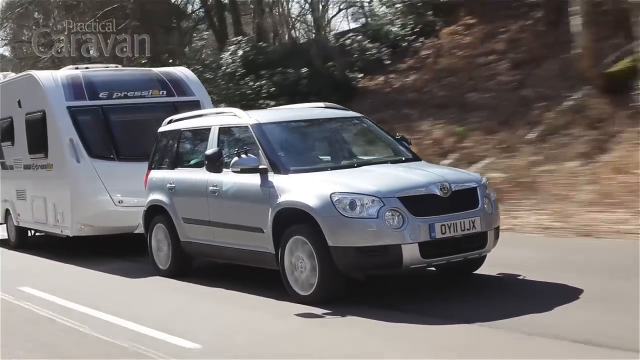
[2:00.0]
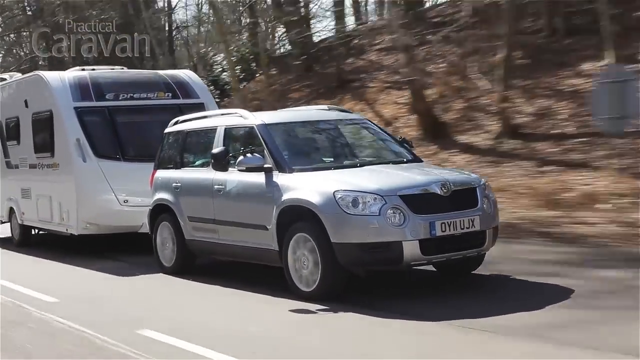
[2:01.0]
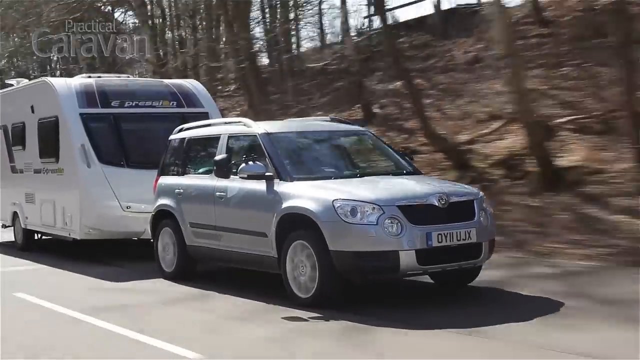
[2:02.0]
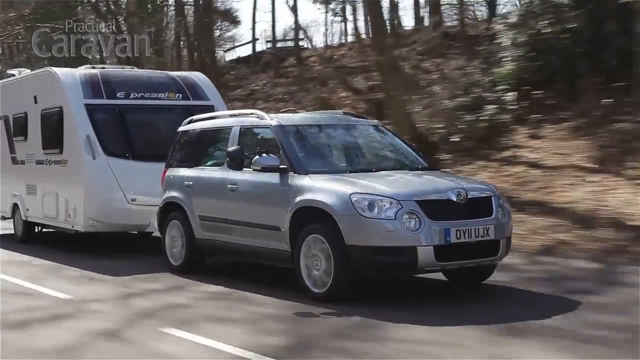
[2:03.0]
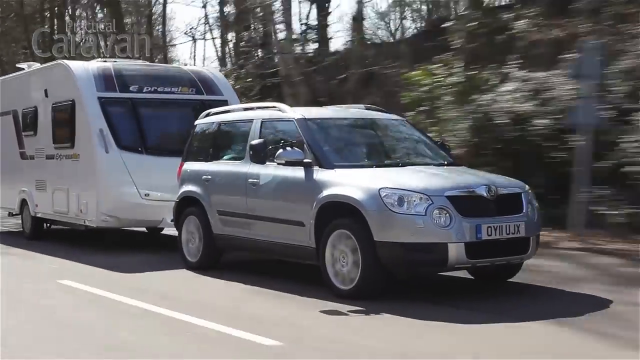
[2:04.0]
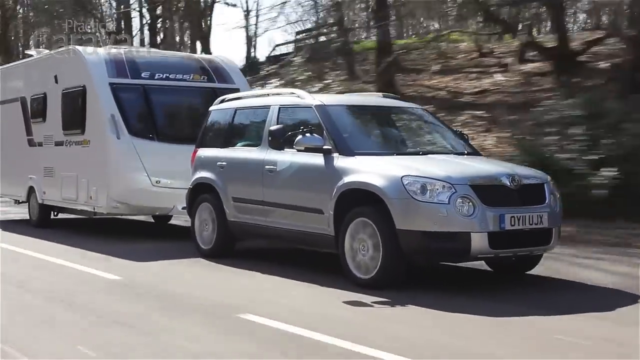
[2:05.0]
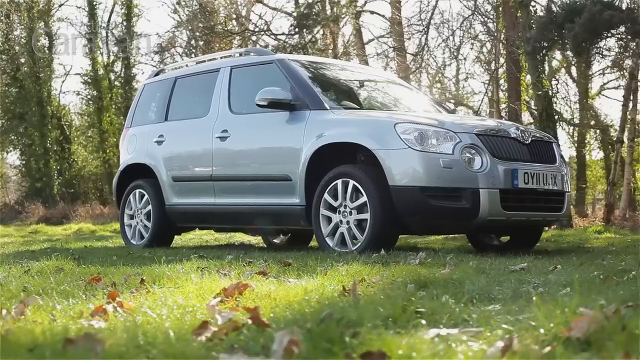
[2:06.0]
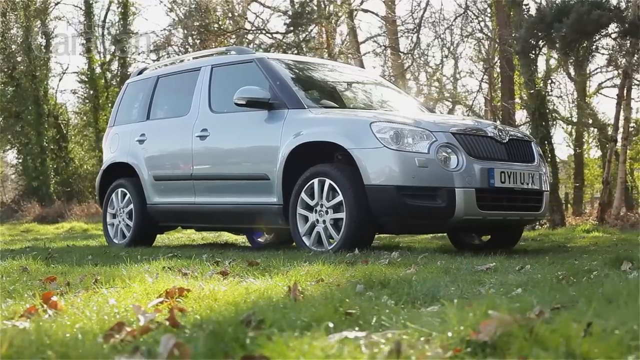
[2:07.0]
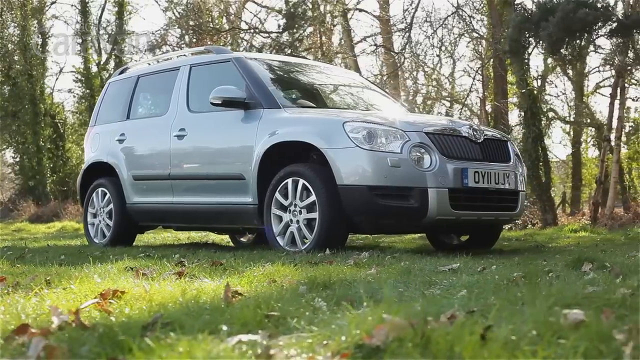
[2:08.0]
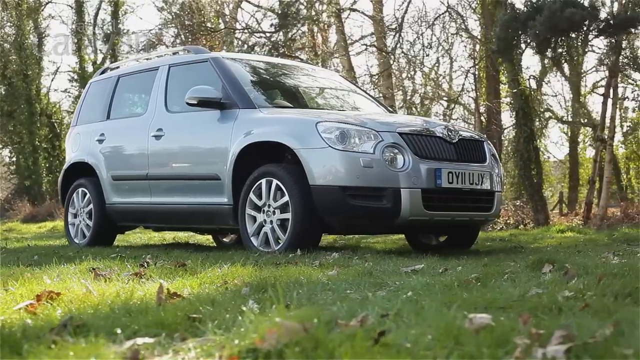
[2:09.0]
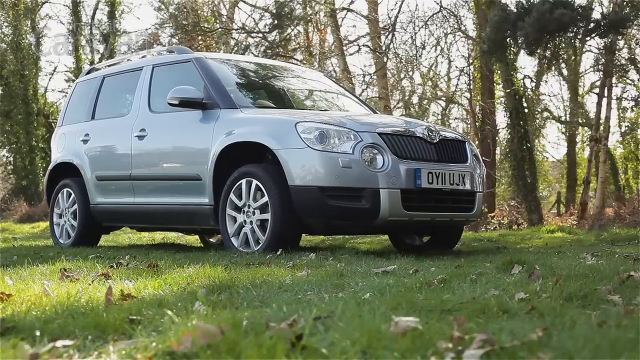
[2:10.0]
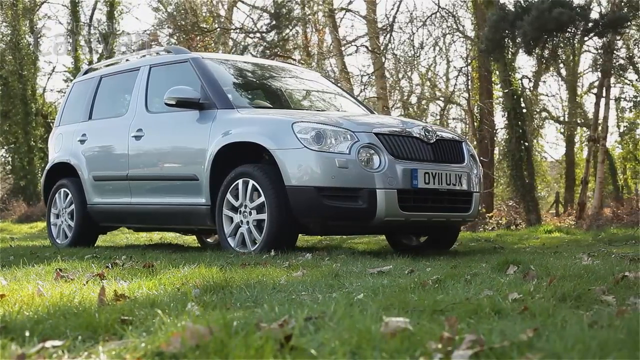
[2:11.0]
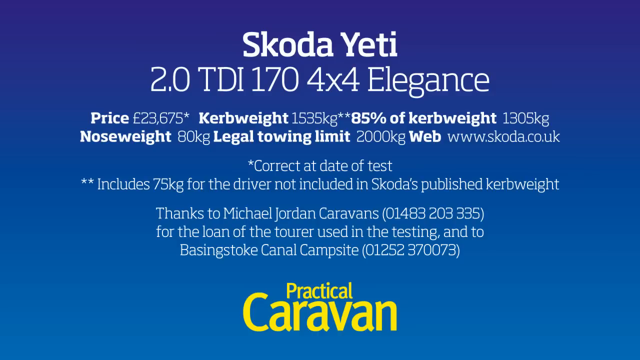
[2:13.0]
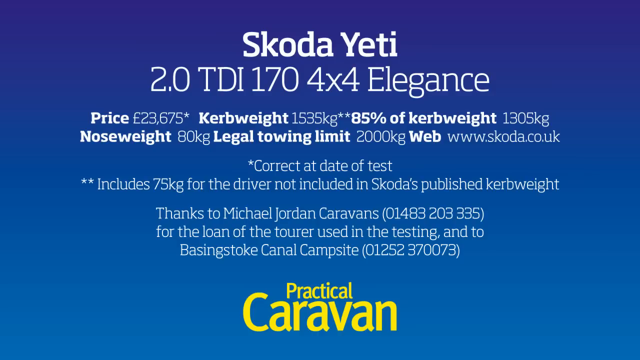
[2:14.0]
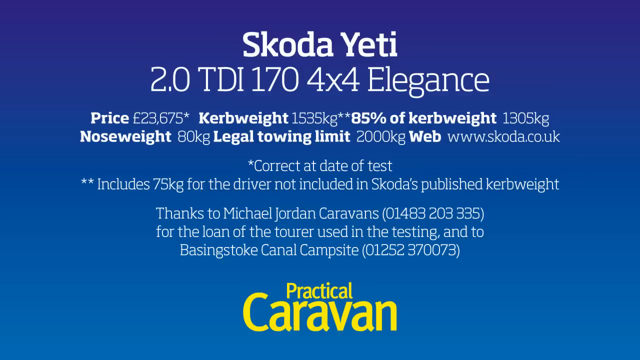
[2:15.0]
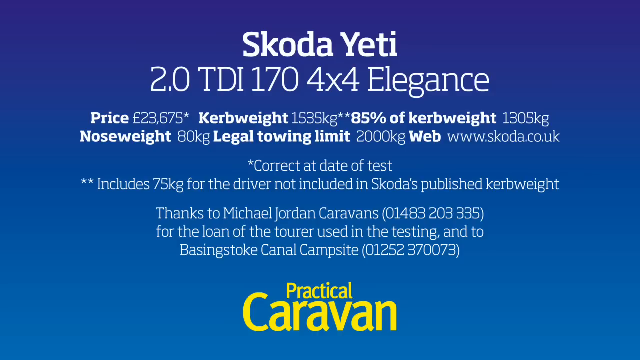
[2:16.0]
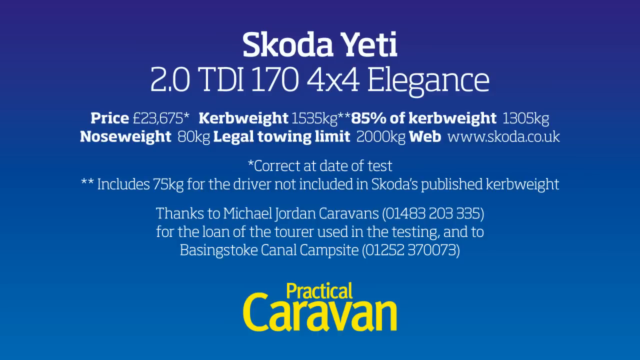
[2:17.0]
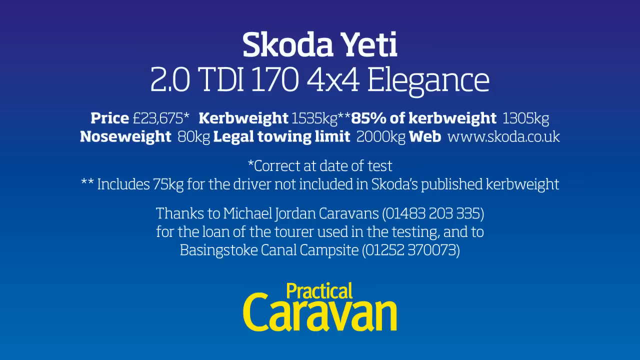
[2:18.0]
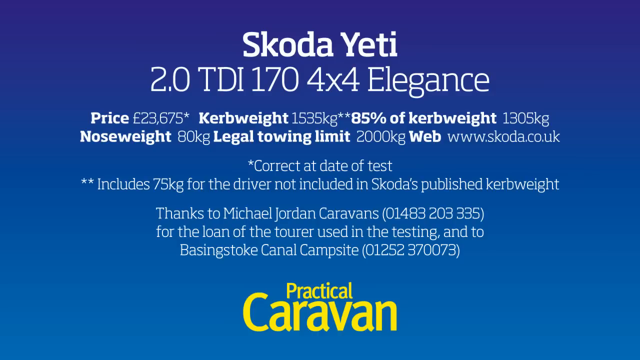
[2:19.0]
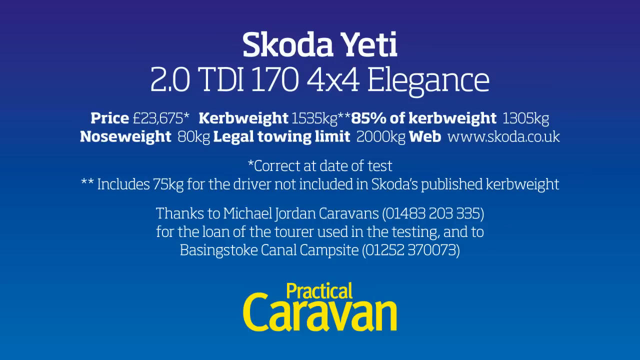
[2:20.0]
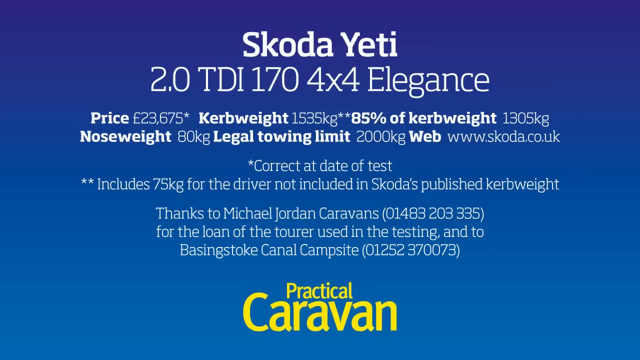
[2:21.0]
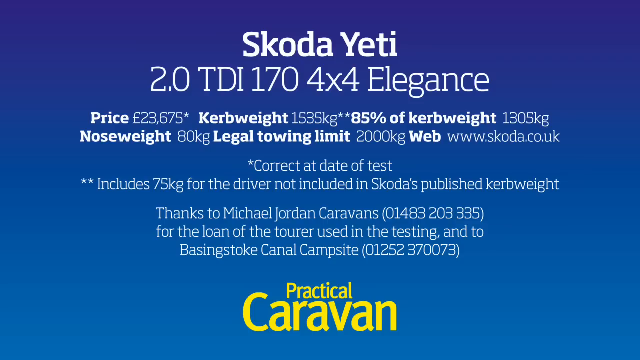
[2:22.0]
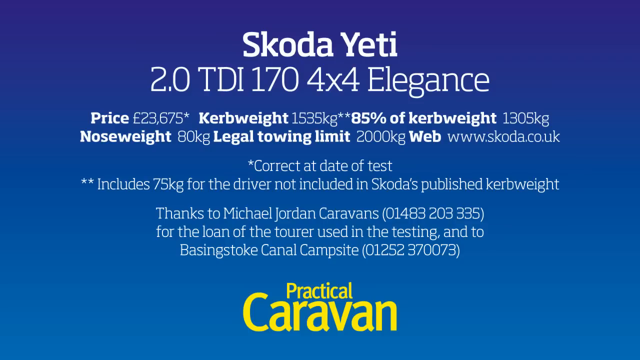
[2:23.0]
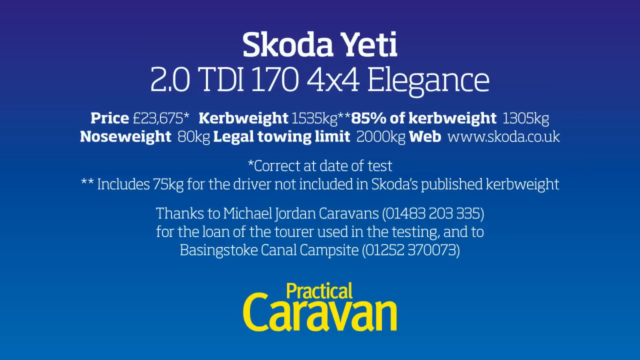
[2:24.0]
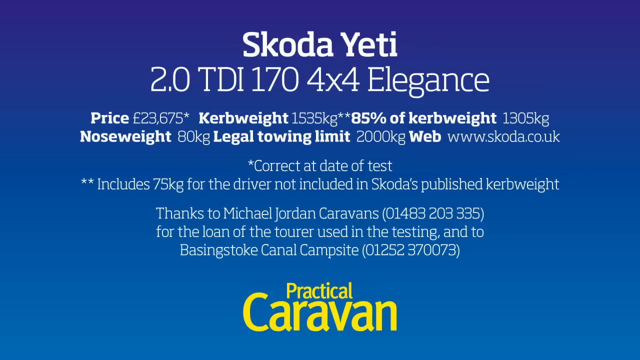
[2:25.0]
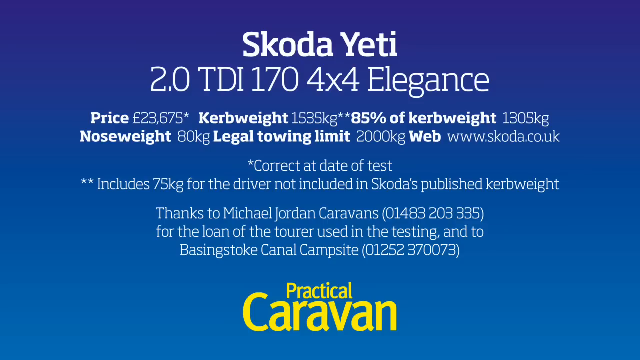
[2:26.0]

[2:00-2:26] The car drives along the road, seen from a front side view, cruising at a good pace with trees going by. Then the car is standing almost in the middle of a meadow, with fallen leaves on the very green, healthy-looking grass, trees behind it, and the sun shining off the front windshield. A blue screen follows, reading "Skoda Yeti 2.0 TDI 170 4x4 Elegance", "Price, 23,675 pounds", "Curb weight, 1535 kilograms", "85% of curb weight, 1305 kilograms", "Nose weight, 80 kg", "Legal towing limit, 2,000 kg" and "Web, www.skoda.co.uk". Further text reads "correct at date of test" and "includes 75 kg for the driver, not included in Skoda's published curb weight", followed by thanks to a caravan business with the number (01483203335) and text mentioning Basingstoke Canoe Campsite with the number (01252370073). At the bottom, "Practical Caravan" appears in big yellow letters, and the video stays on this screen until the end.